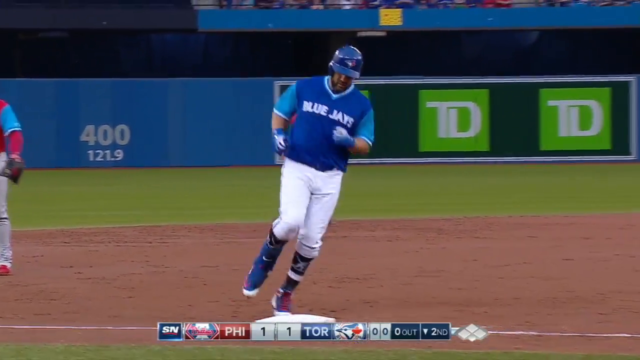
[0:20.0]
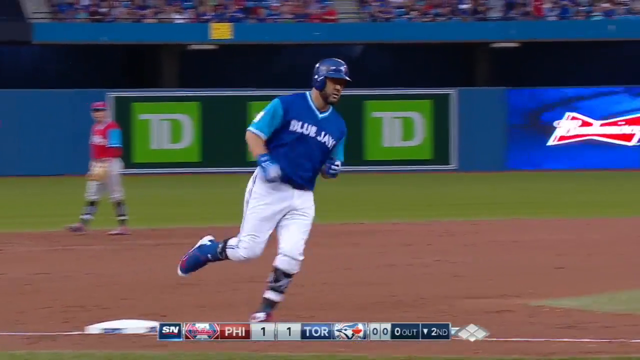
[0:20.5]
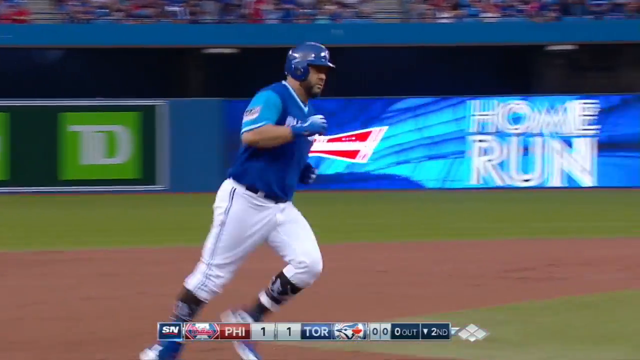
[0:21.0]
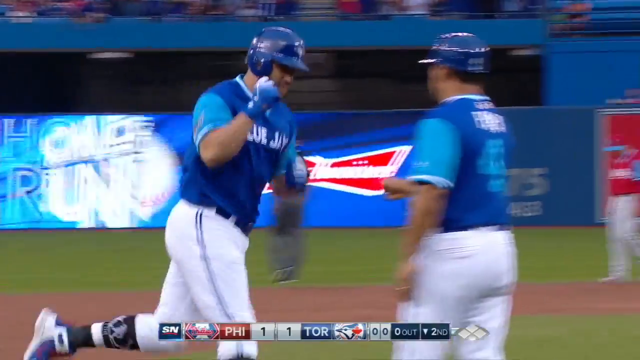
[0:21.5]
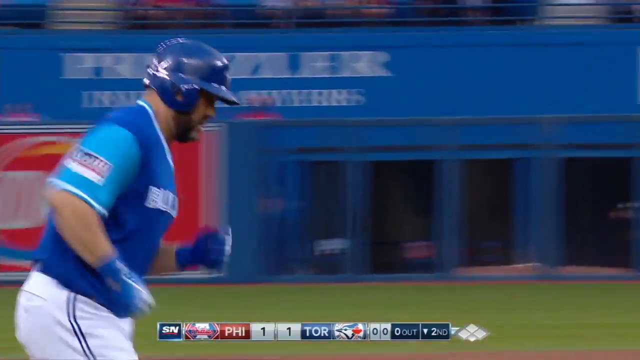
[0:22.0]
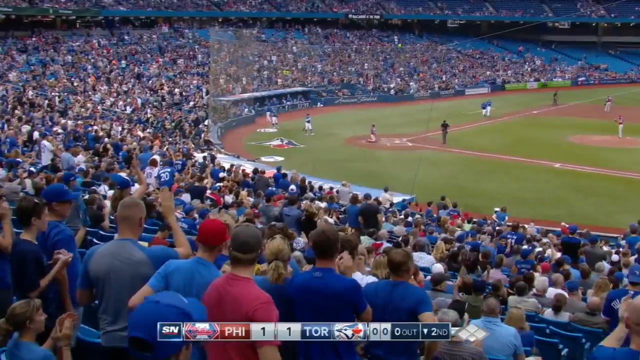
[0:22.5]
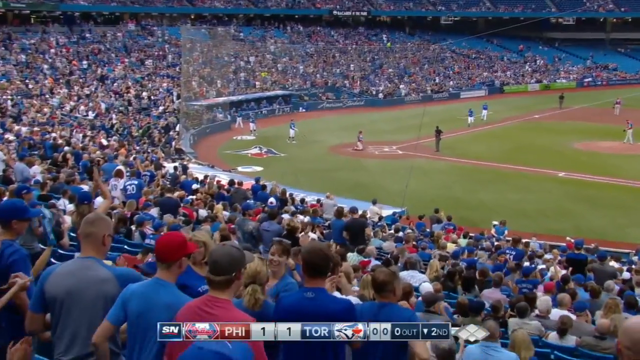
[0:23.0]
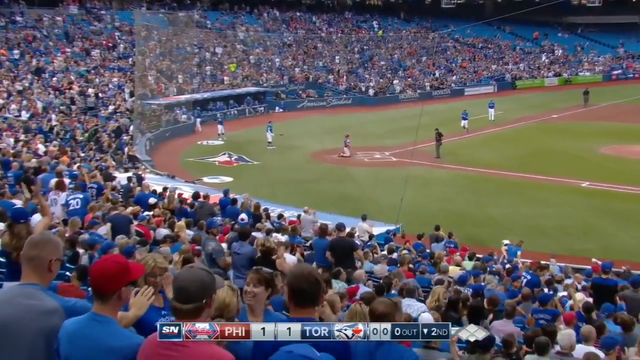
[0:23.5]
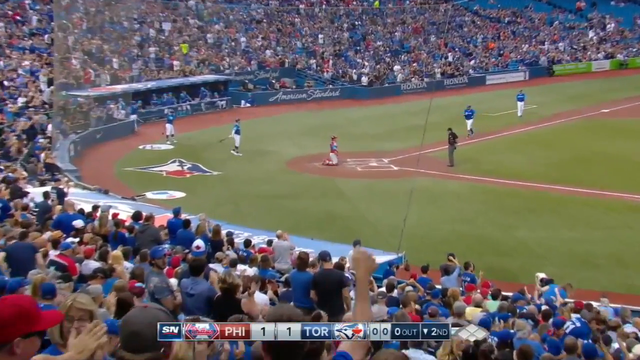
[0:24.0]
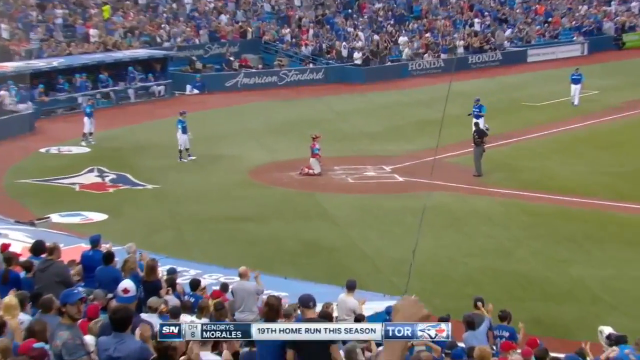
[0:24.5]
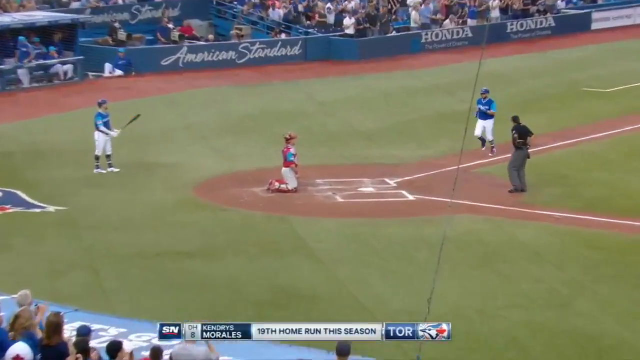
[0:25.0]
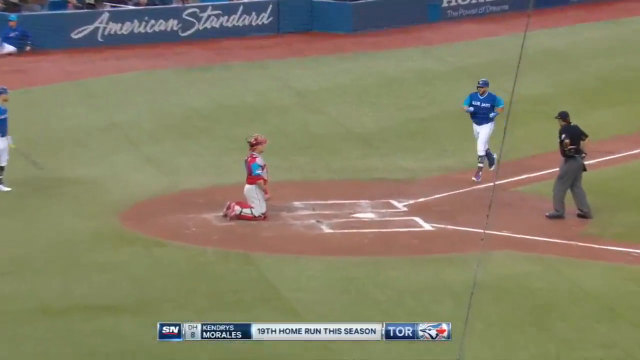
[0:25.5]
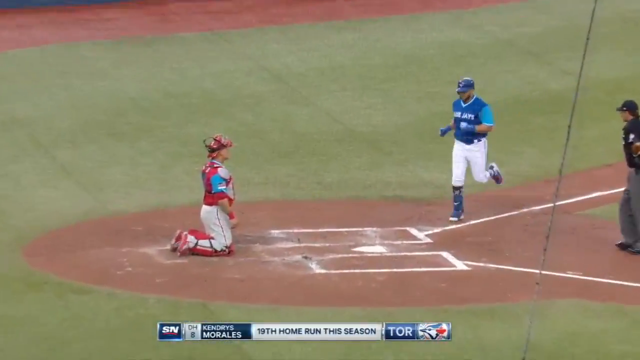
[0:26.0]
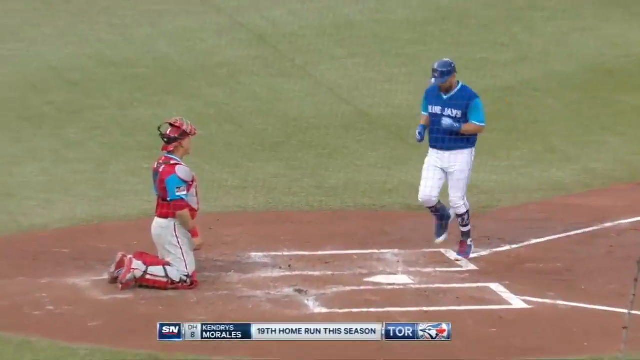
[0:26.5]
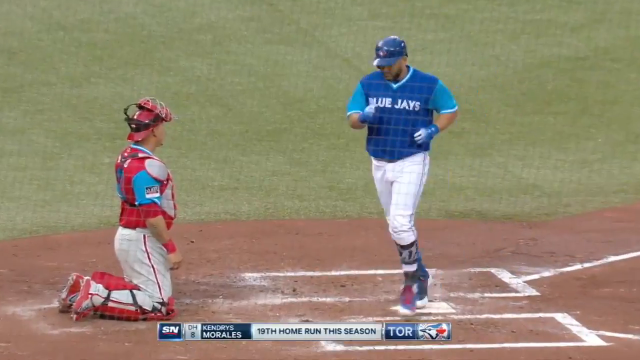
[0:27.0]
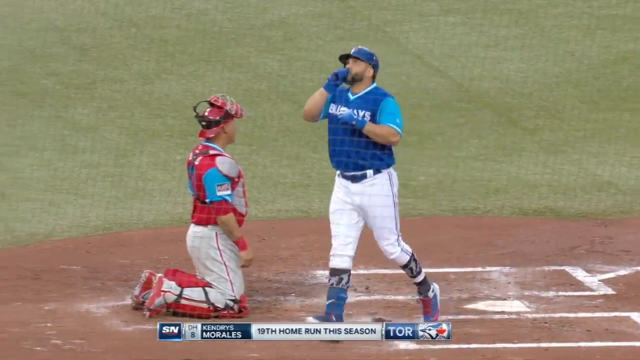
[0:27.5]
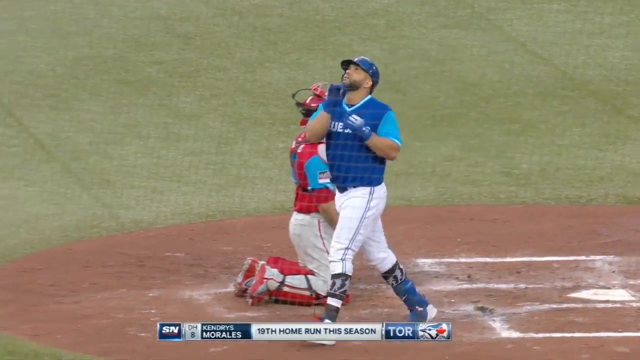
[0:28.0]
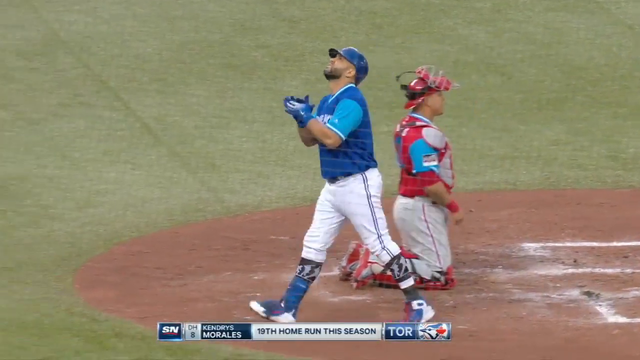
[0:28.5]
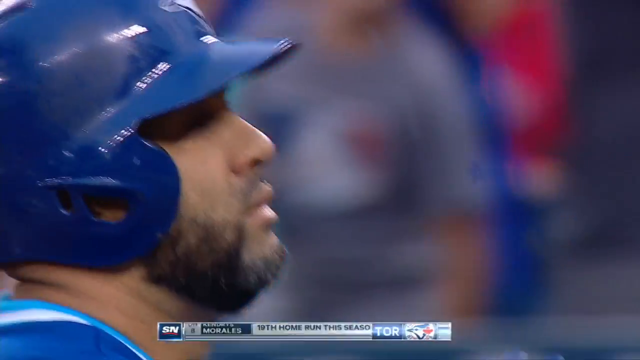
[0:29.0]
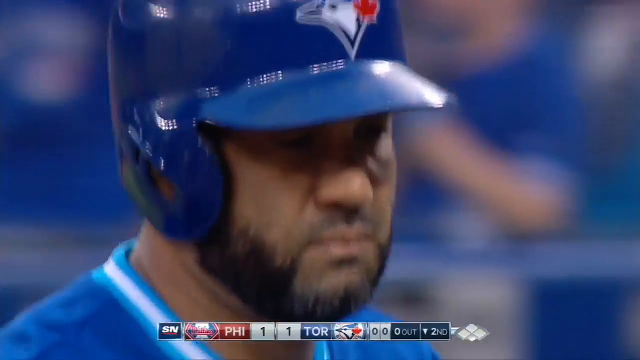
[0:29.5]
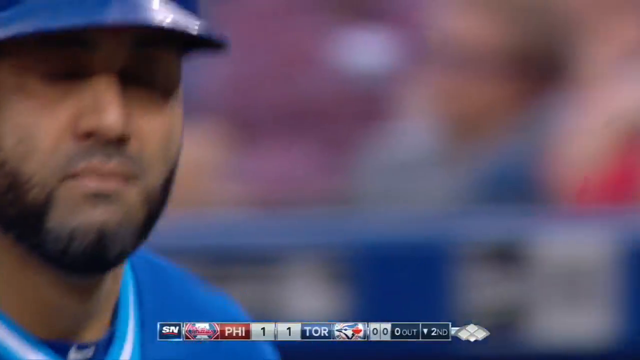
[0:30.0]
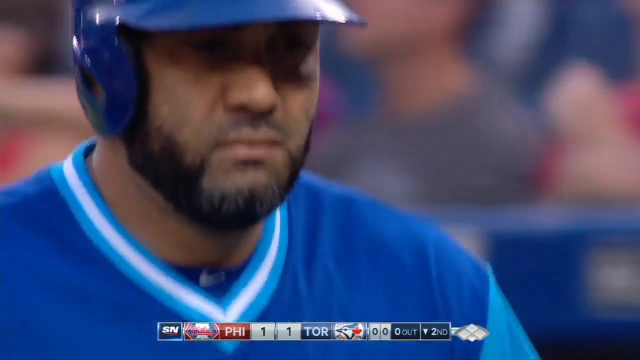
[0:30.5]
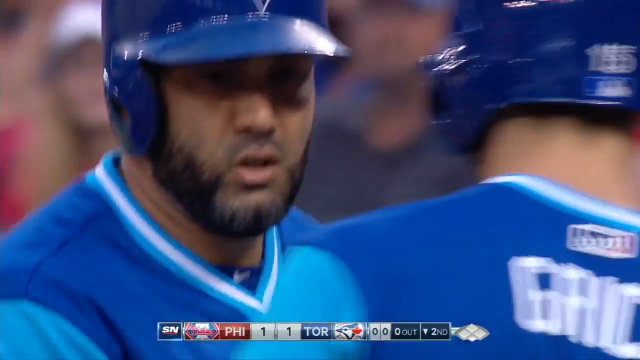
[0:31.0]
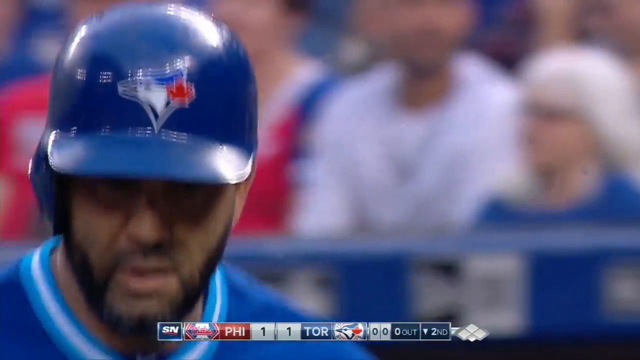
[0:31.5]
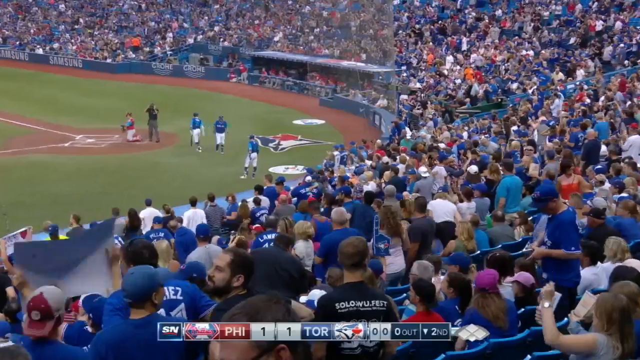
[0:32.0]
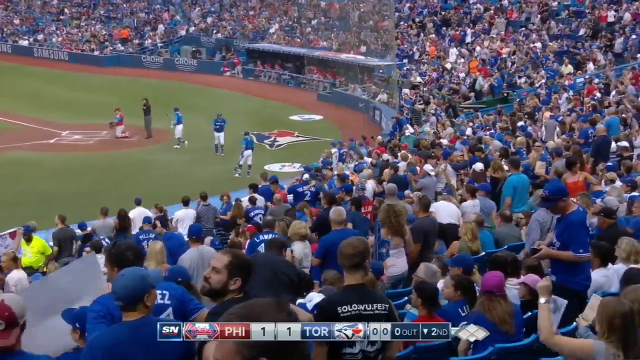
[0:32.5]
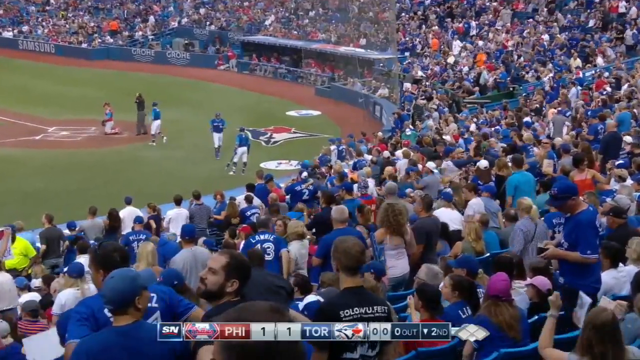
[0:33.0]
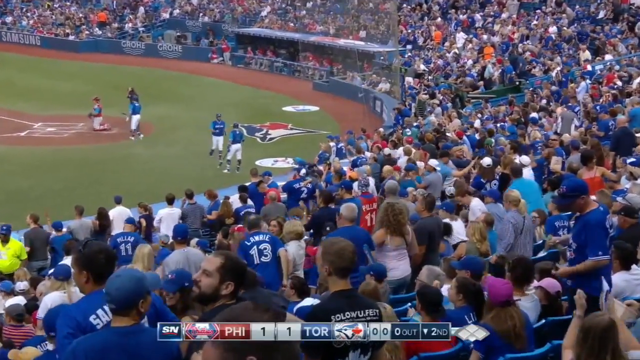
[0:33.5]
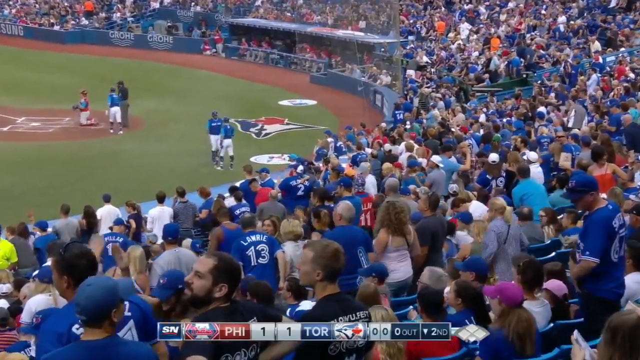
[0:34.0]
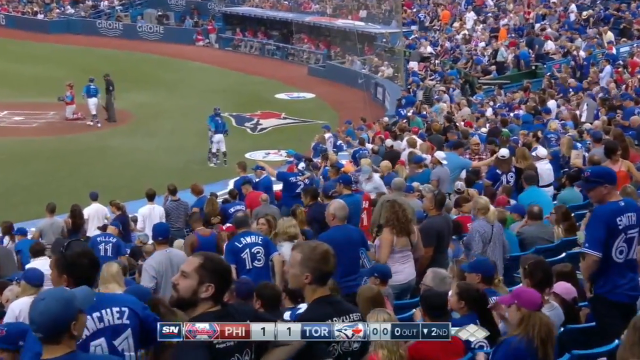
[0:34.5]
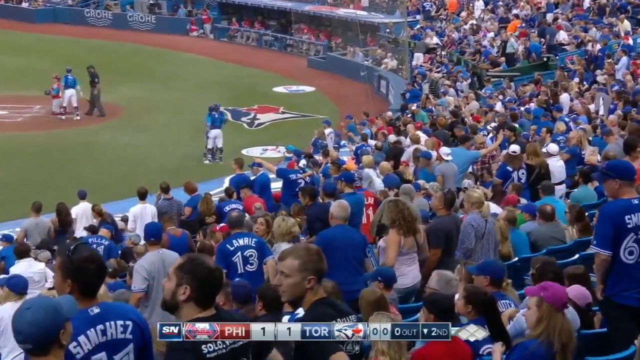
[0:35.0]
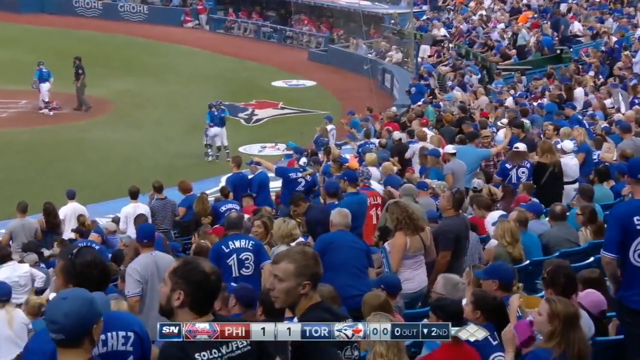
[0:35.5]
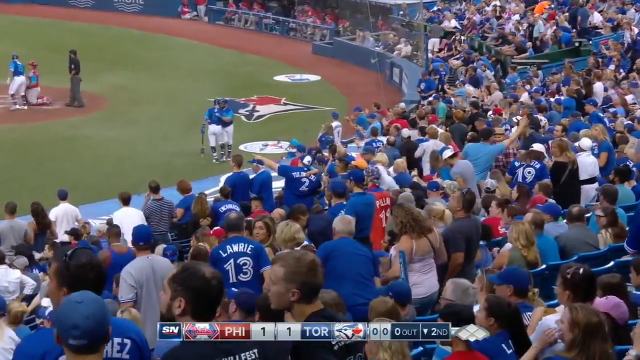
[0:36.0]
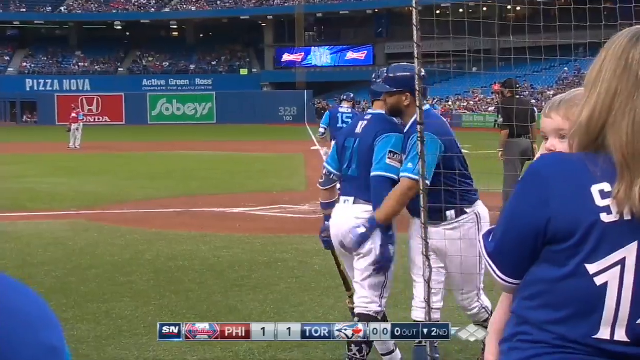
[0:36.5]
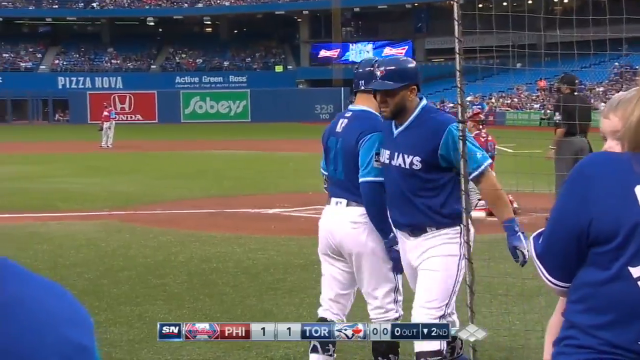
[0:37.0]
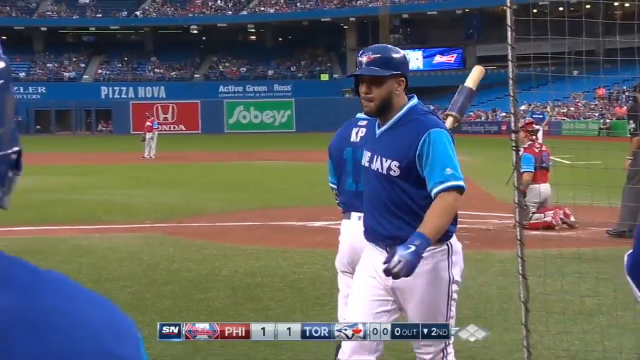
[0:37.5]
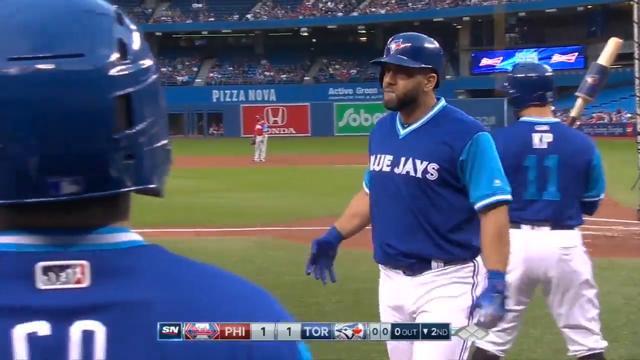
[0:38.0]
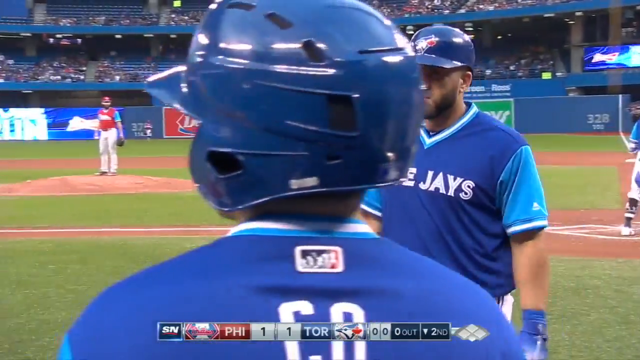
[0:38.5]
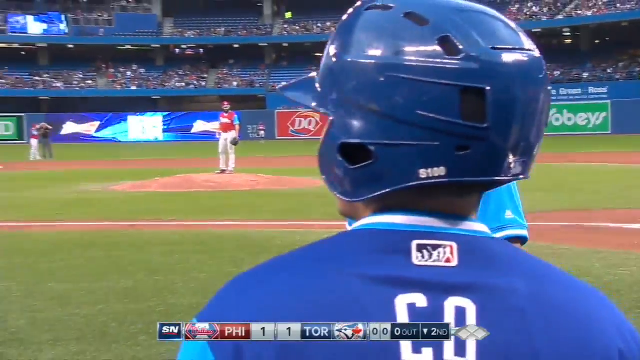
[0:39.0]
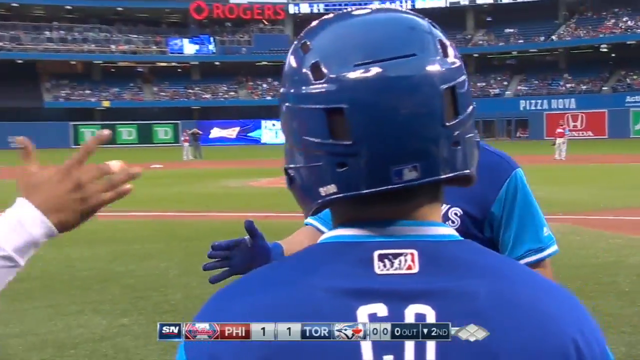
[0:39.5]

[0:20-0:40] A runner who has hit a home run is running the bases and crosses home plate while his team cheers for him. The whole crowd cheers except for the members of the other team. He is from the Blue Jays, wearing a blue vest jersey, white pants, and a helmet that covers the ear facing out toward the pitcher. He runs slowly, in no hurry, and looks up to the heavens almost as a thank you. Back near the dugout area he gets lots of handshakes and high fives.